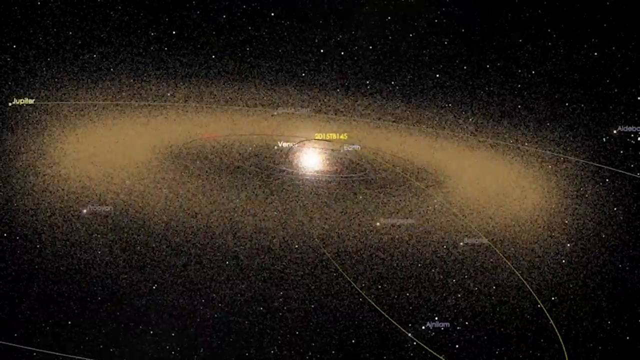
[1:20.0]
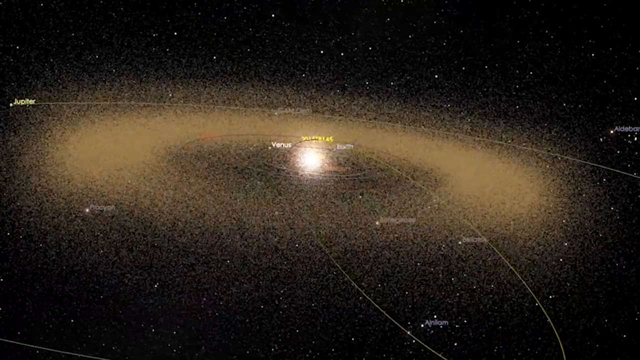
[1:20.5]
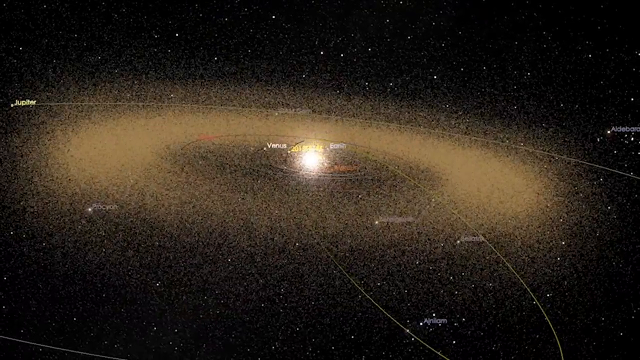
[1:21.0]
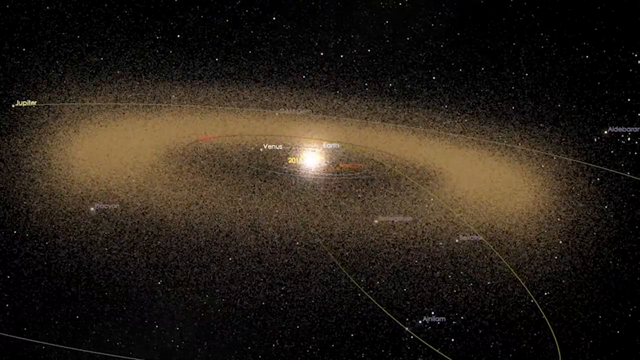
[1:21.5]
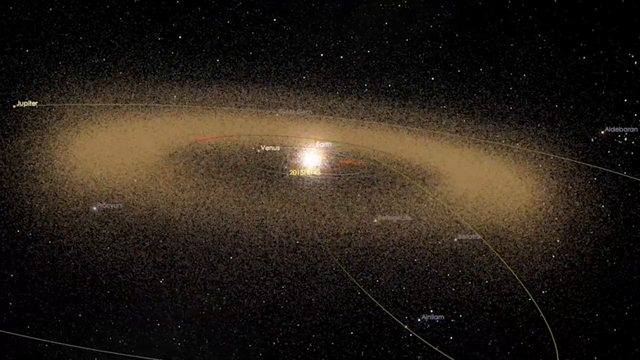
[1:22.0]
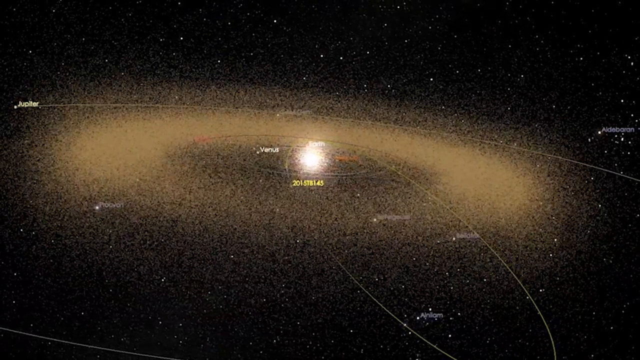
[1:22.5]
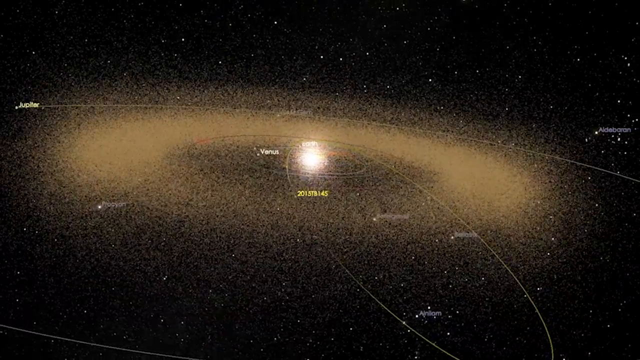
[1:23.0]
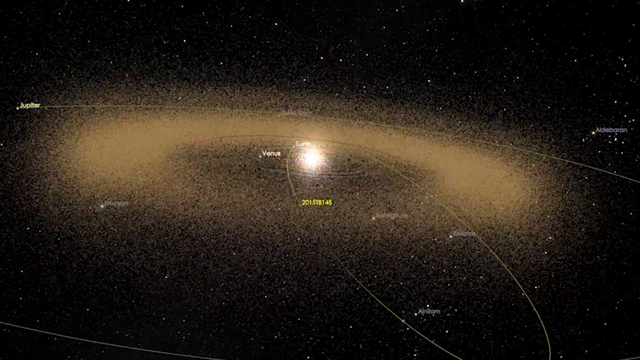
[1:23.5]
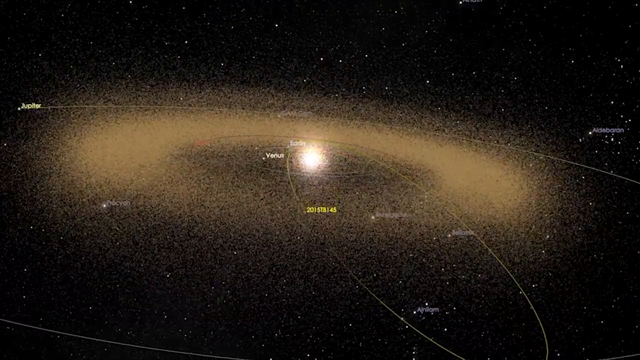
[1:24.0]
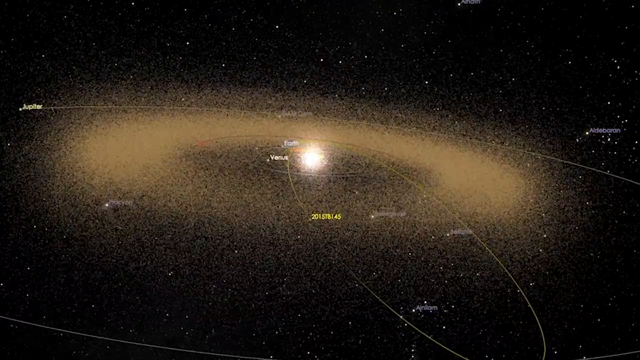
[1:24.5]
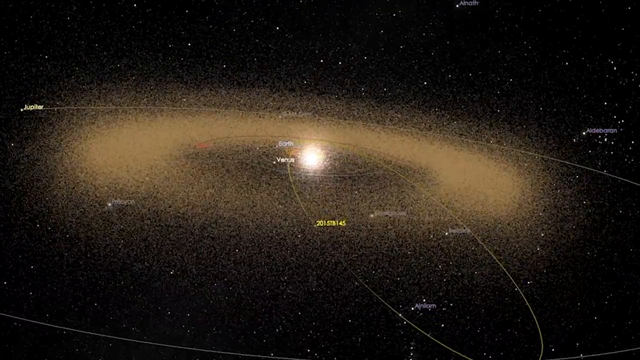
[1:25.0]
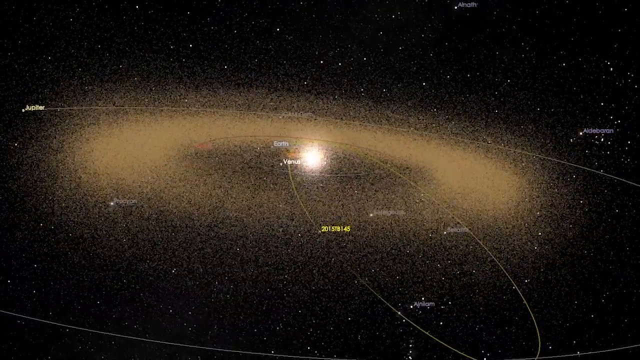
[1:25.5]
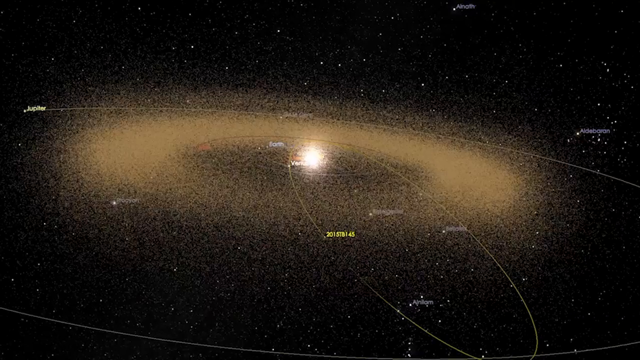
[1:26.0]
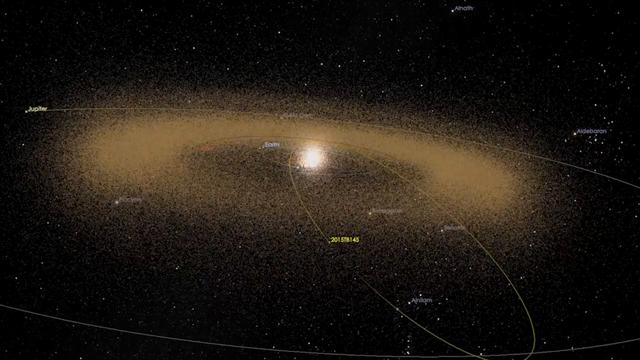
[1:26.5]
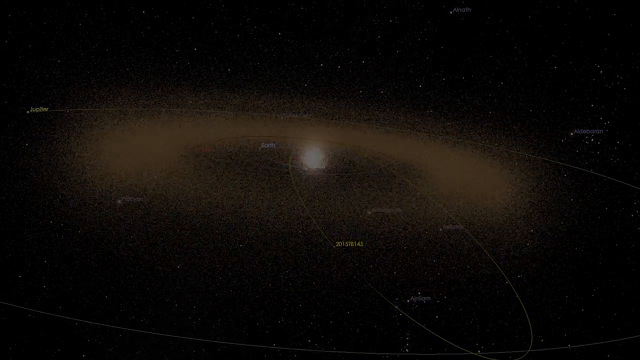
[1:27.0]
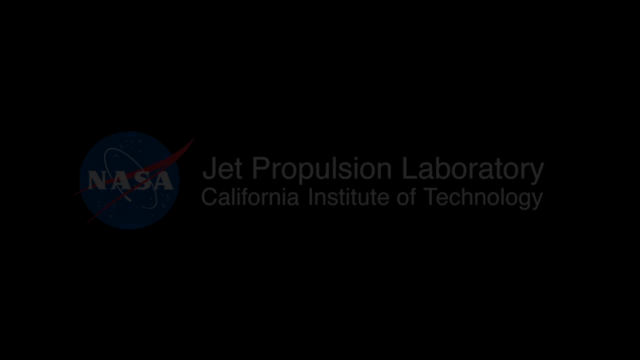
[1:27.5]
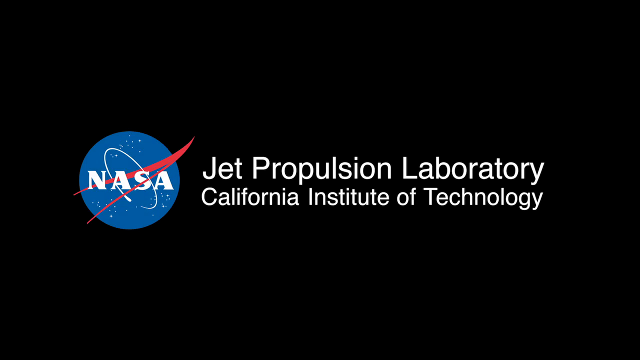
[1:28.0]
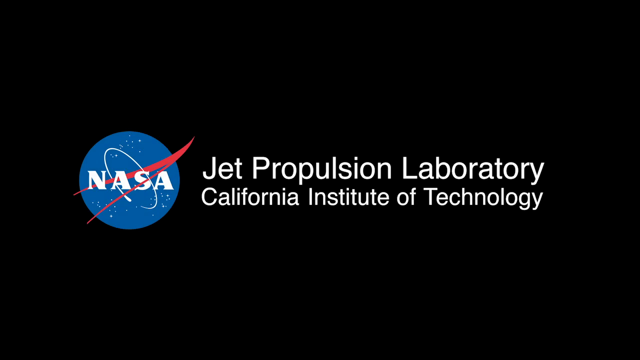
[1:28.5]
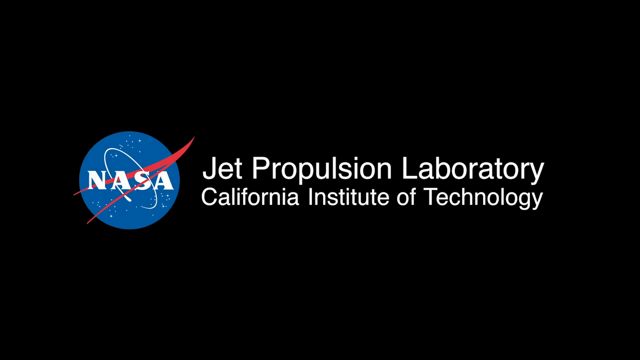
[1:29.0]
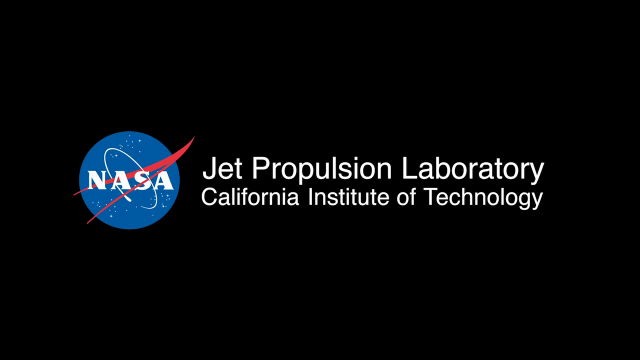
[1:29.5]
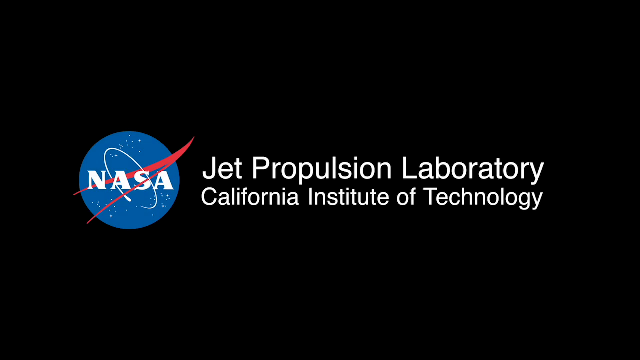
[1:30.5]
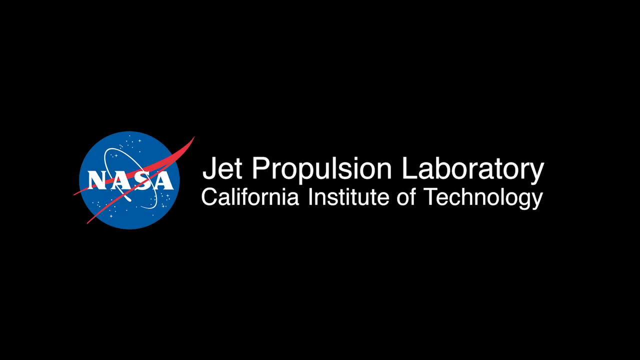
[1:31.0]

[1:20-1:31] The video returns to what looks like the original image: a luminous ball in the center of a ring of what is possibly cosmic debris. Various paths are outlined, with text perhaps indicating locations or objects along them. At the end, a logo for the Jet Propulsion Laboratory, NASA, and the California Institute of Technology appears.